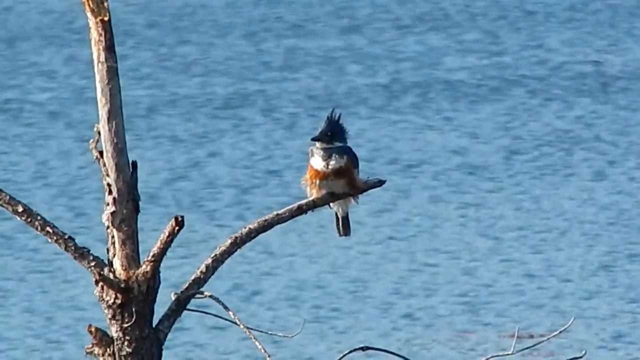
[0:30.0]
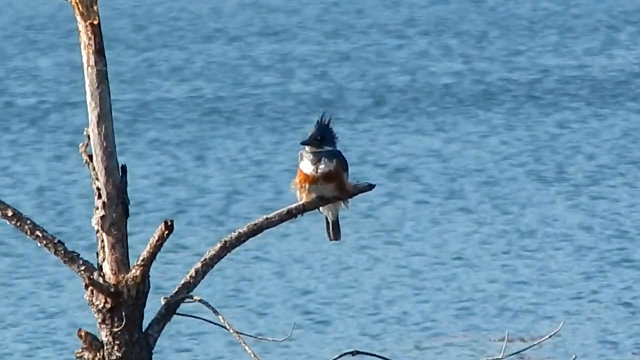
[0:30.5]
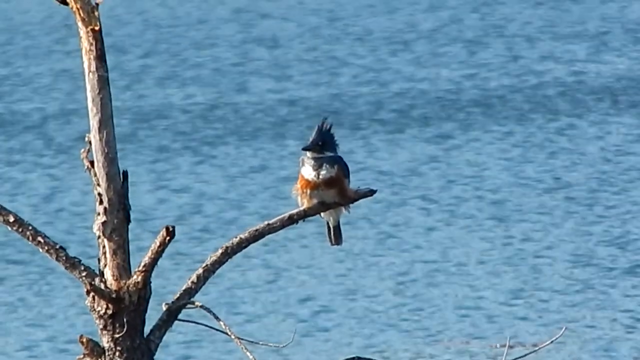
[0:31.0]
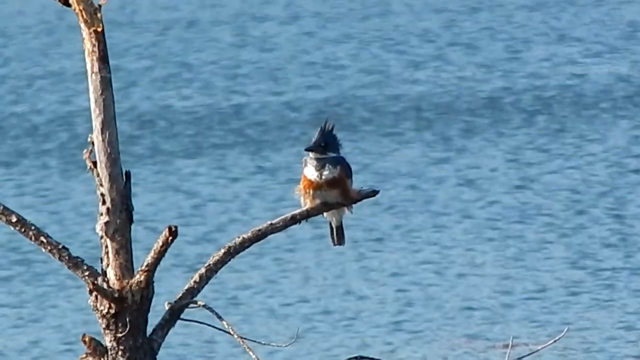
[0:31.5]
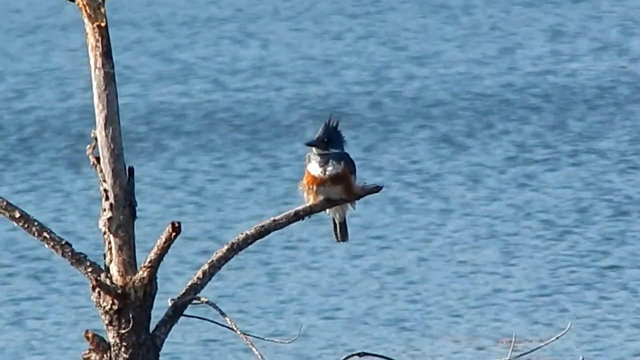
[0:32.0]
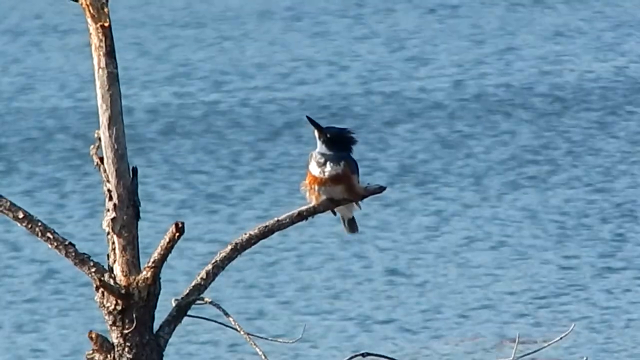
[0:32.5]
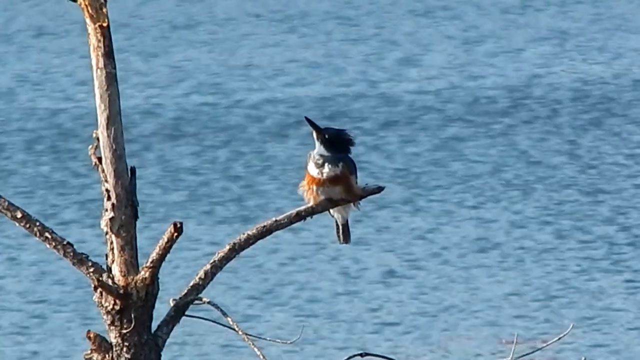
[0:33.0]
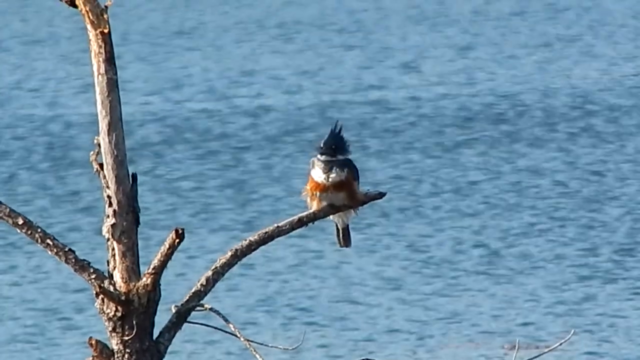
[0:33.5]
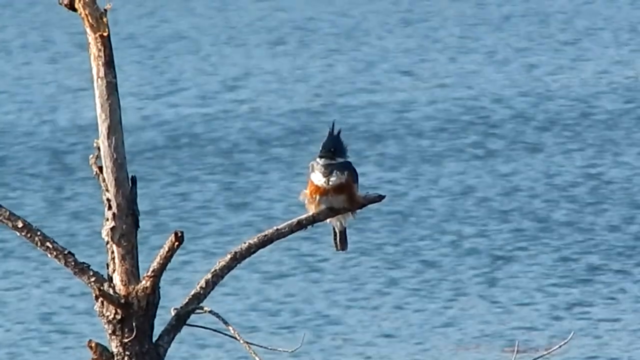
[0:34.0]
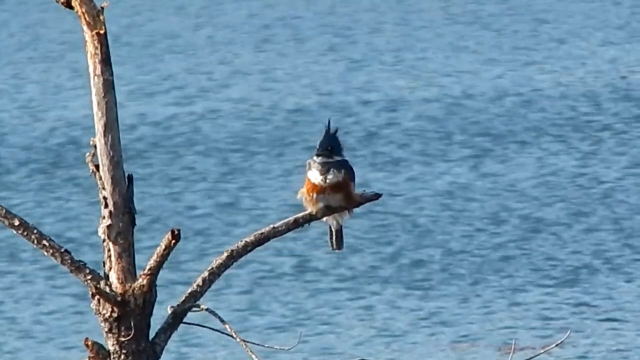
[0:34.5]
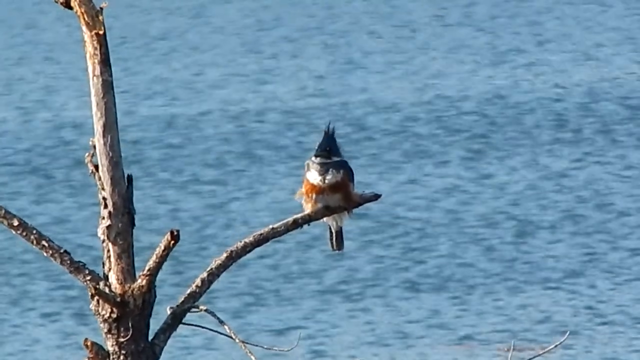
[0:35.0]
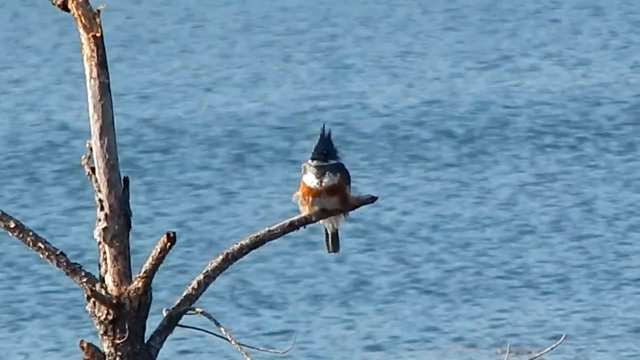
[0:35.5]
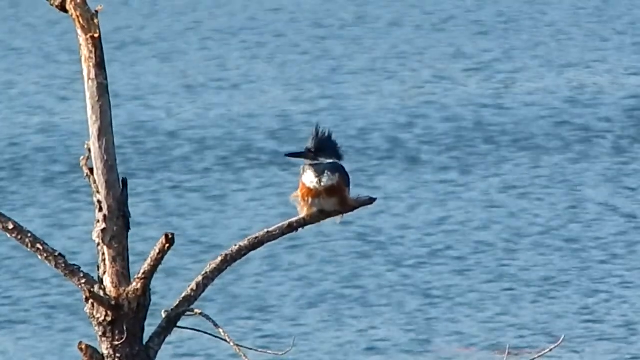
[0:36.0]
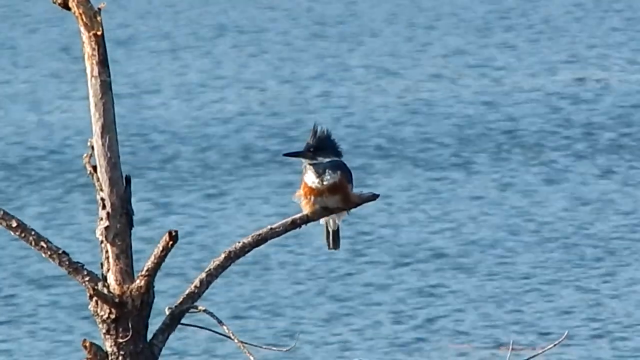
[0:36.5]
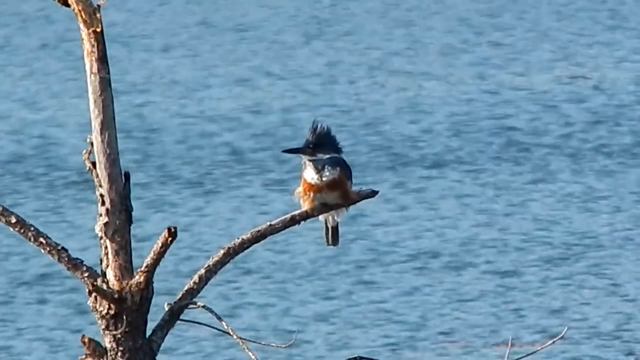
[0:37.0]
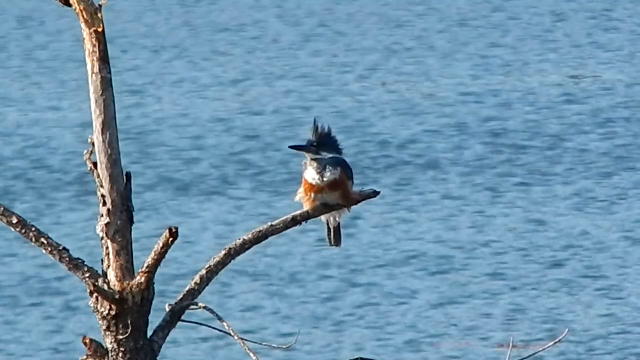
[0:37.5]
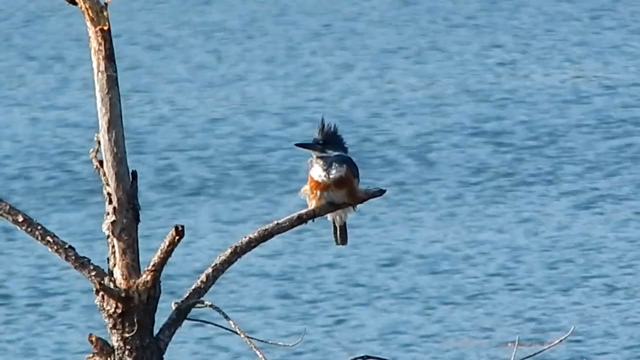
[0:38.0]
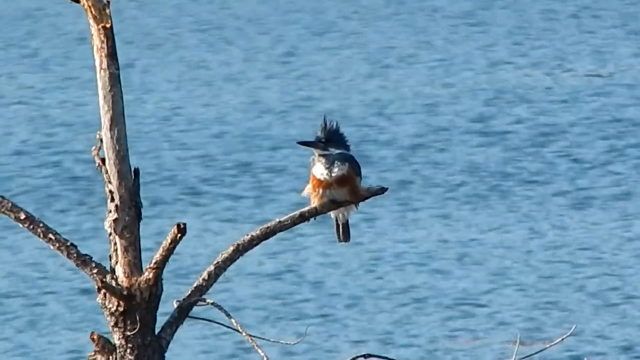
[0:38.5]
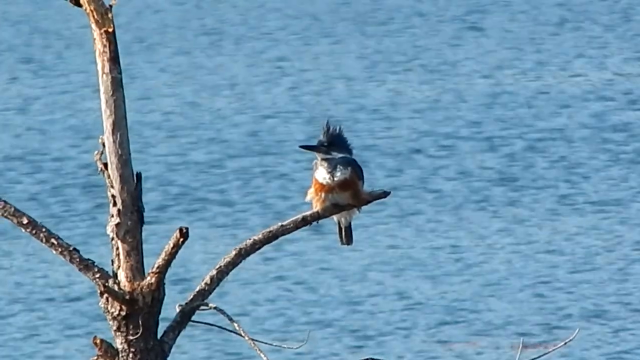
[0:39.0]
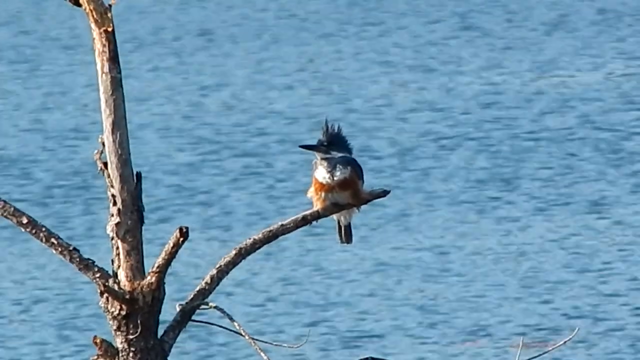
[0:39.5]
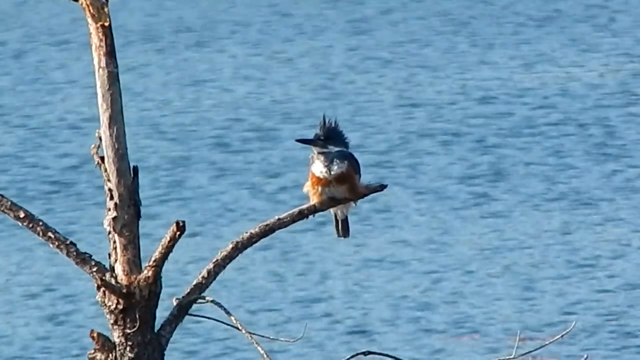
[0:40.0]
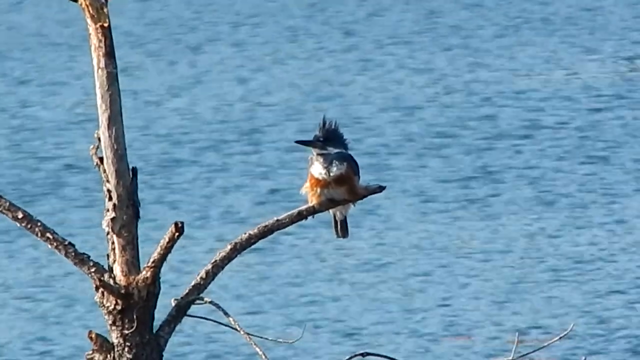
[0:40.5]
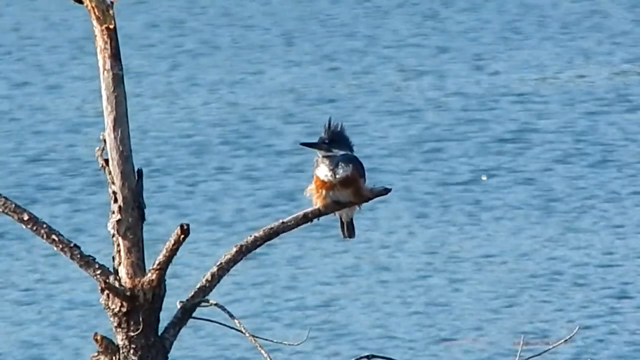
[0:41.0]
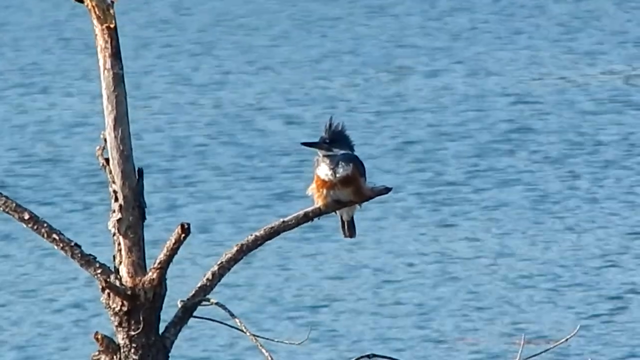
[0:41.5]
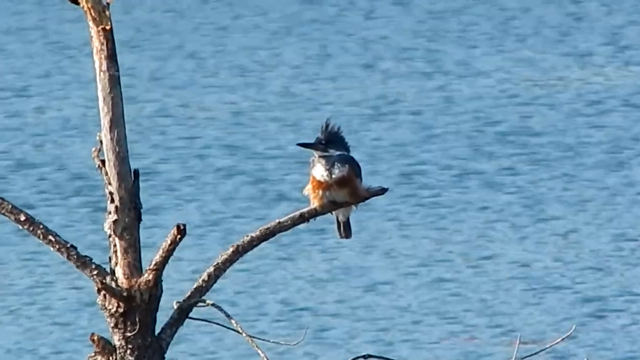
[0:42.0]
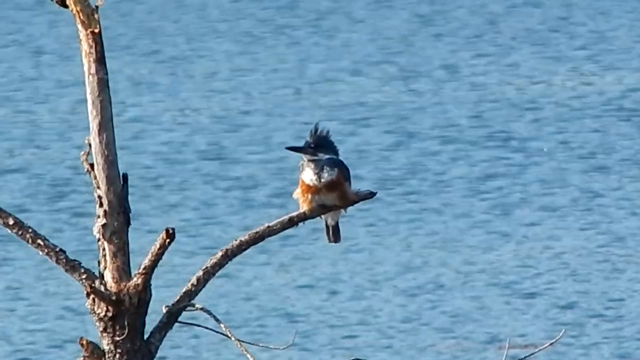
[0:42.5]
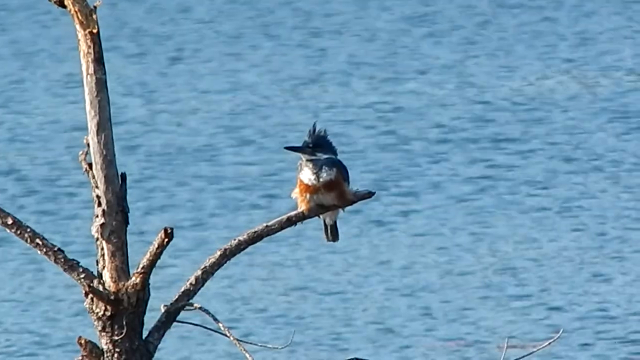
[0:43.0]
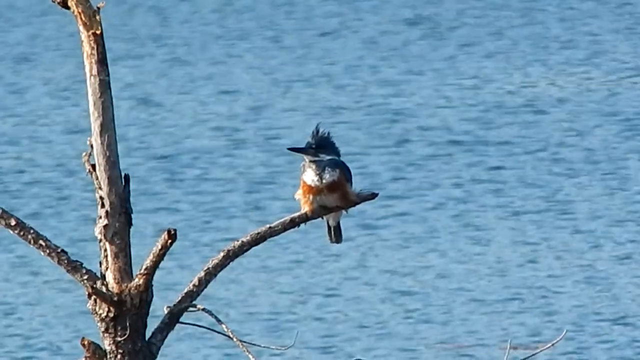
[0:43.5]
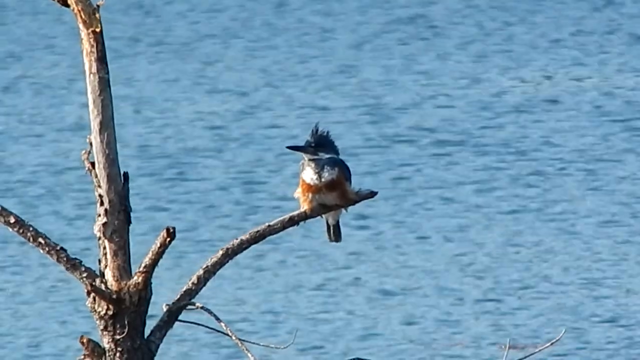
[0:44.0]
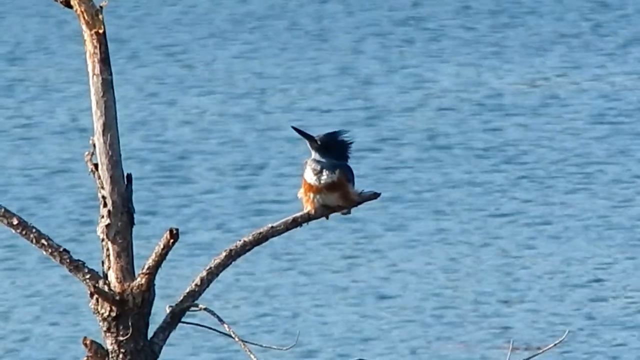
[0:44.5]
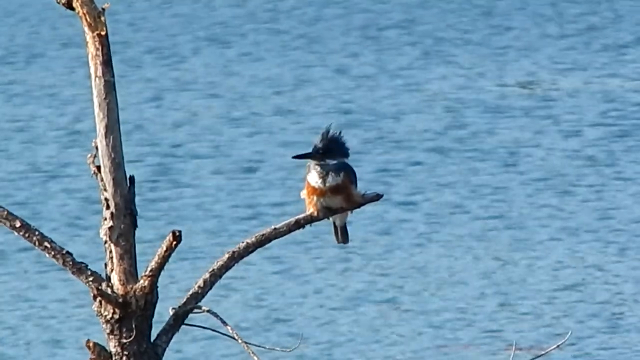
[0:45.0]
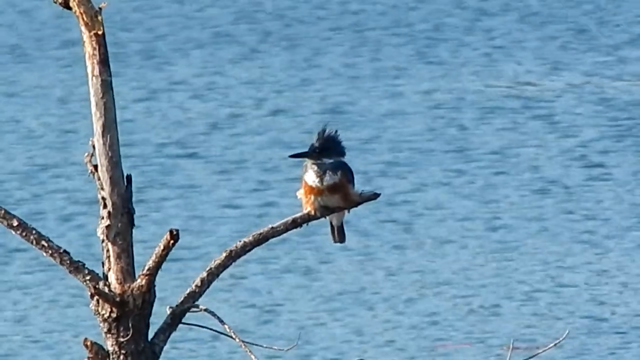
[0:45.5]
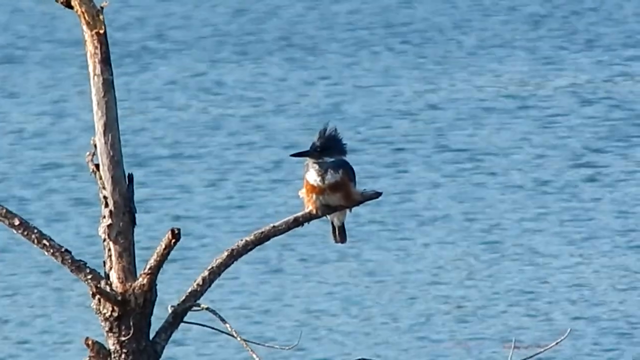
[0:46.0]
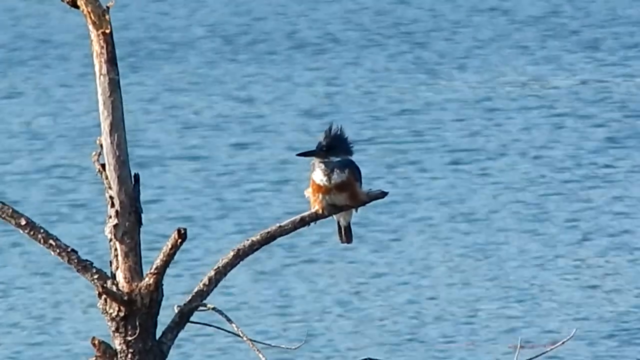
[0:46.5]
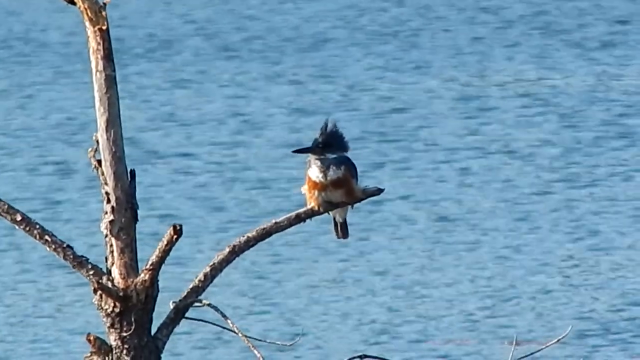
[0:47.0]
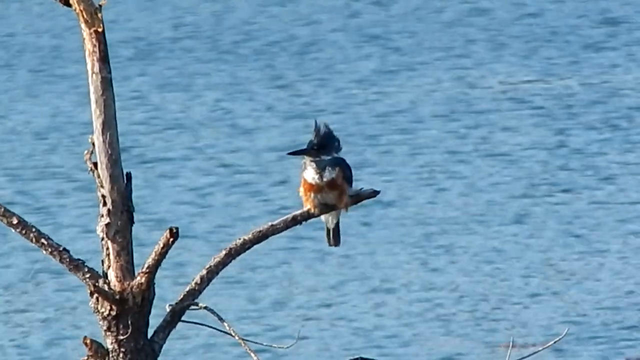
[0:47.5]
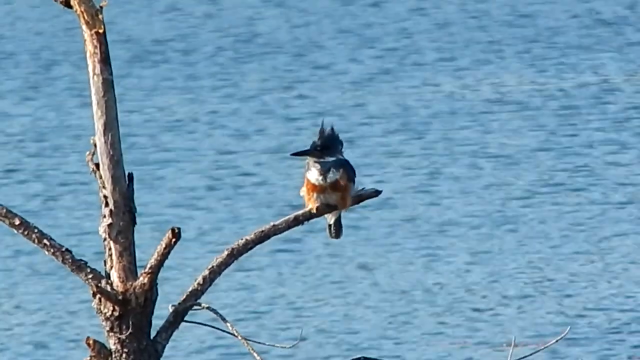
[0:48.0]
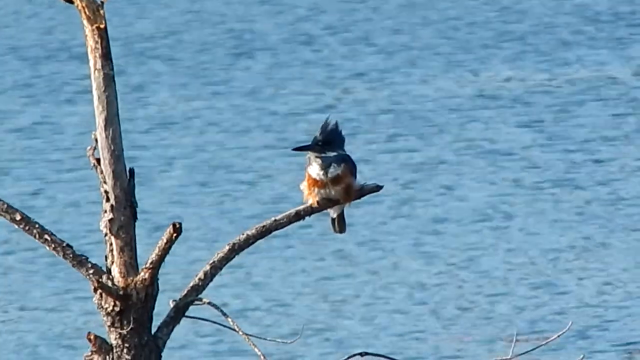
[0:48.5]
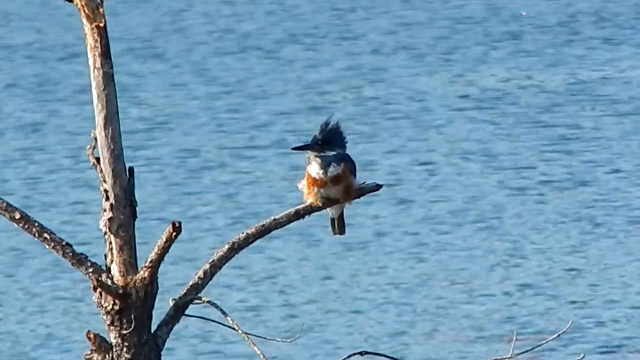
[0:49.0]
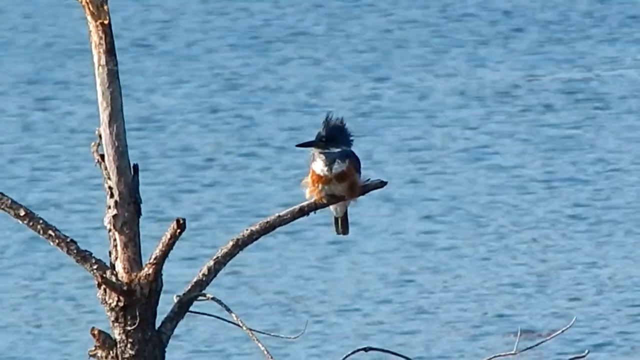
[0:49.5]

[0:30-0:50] A woodpecker sits on a branch of an old, dead tree. The tree has no needles or leaves, and most of its bark has worn away, except on the branch the bird is sitting on. The bird has long dark tail feathers, a reddish-brown breast, a pointy beak, and a crest of dark feathers coming from the top of its head. Behind the bird is a lake that is very still, though small ripples from the wind are visible on it. The bird looks around, looks up at the sky, and then looks around again; it is very alert and takes in its surroundings, continuing to look up at the sky every few seconds. Two other small branches protrude from the tree; one still has bark and the other does not.